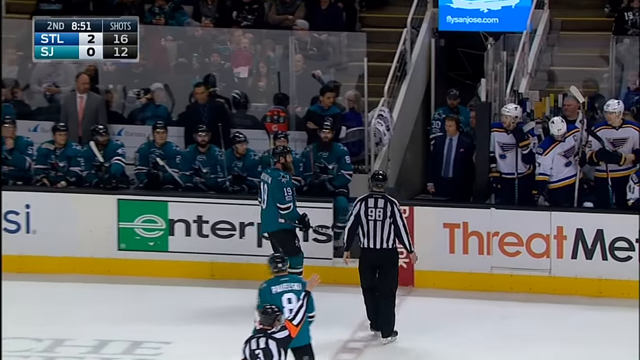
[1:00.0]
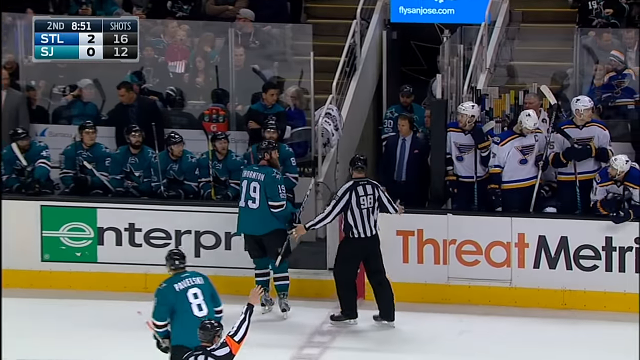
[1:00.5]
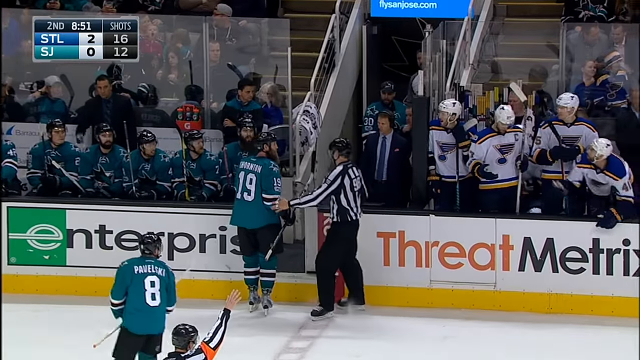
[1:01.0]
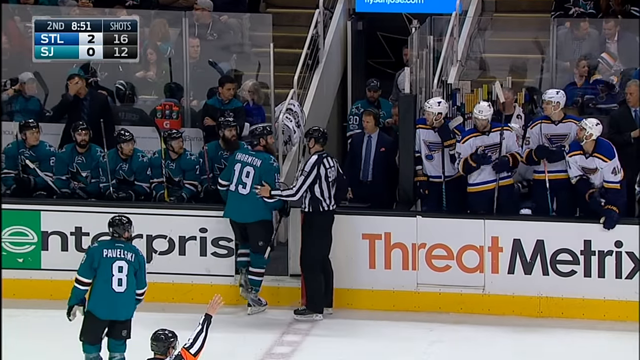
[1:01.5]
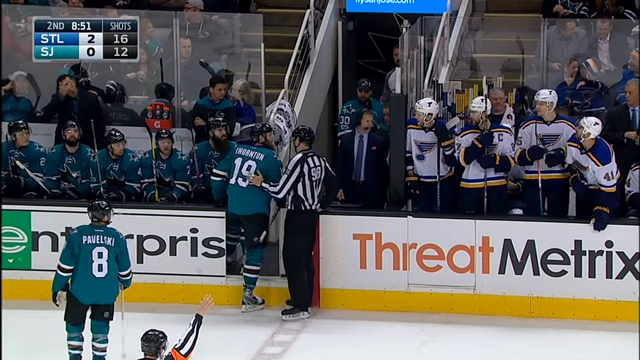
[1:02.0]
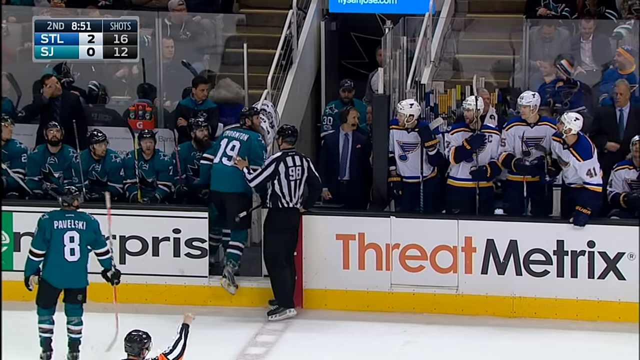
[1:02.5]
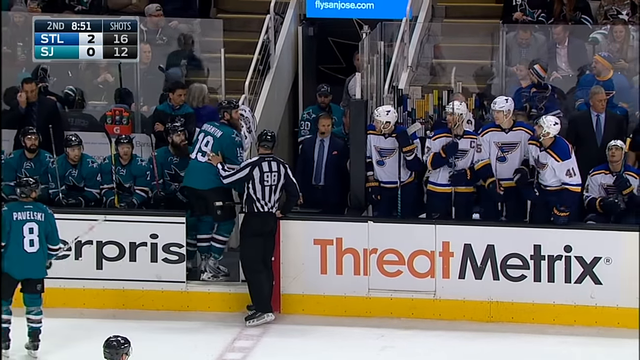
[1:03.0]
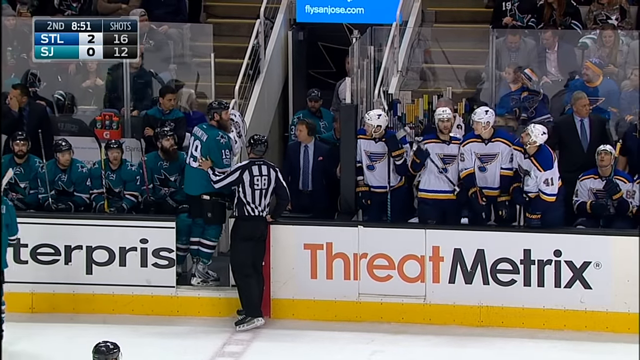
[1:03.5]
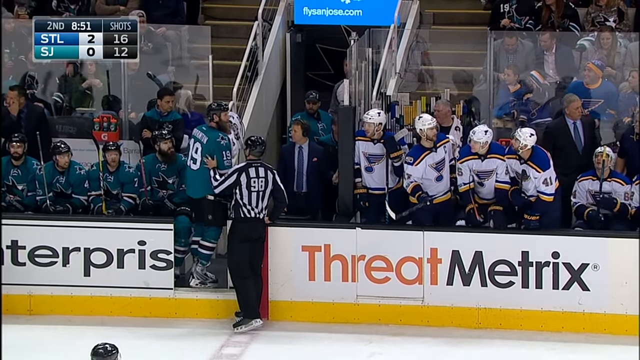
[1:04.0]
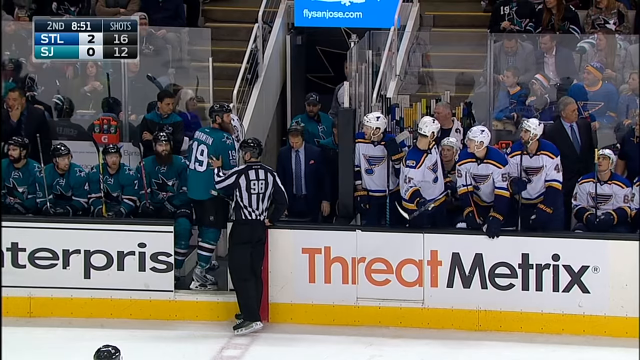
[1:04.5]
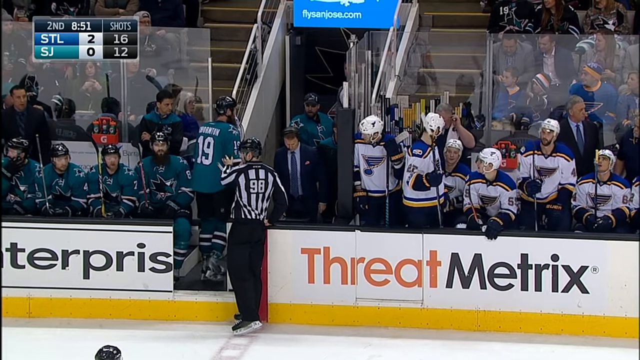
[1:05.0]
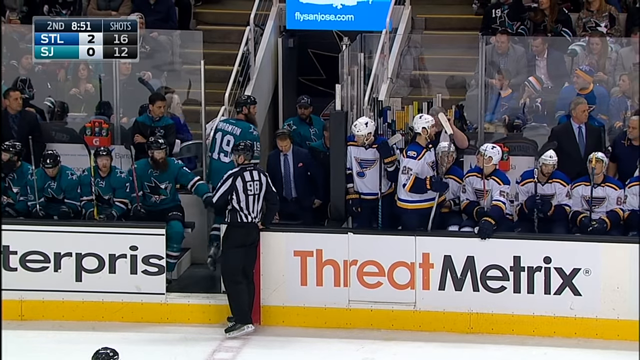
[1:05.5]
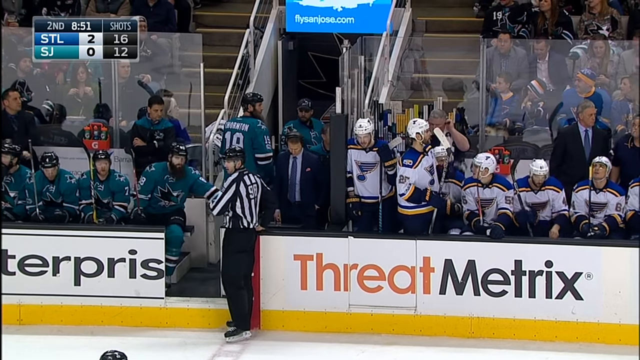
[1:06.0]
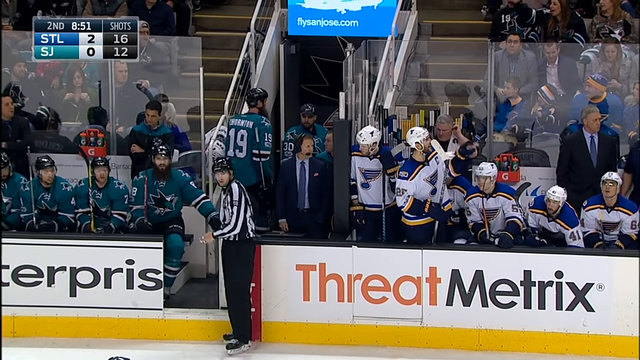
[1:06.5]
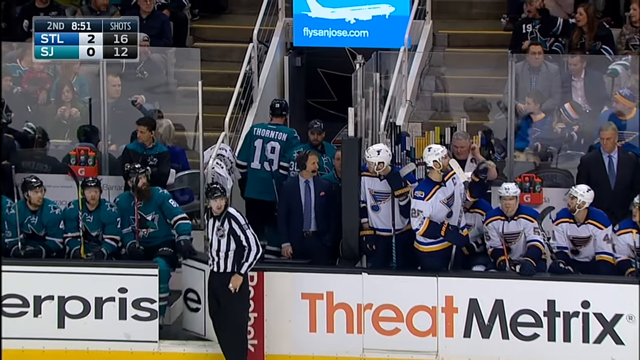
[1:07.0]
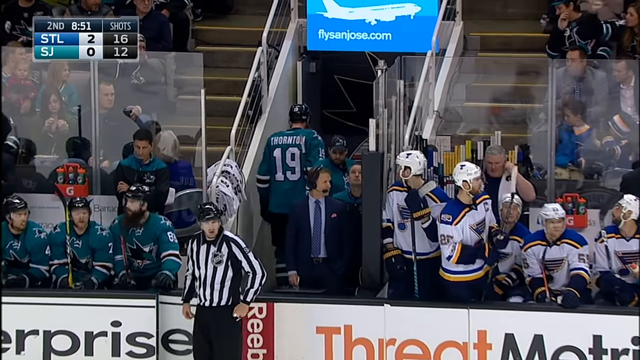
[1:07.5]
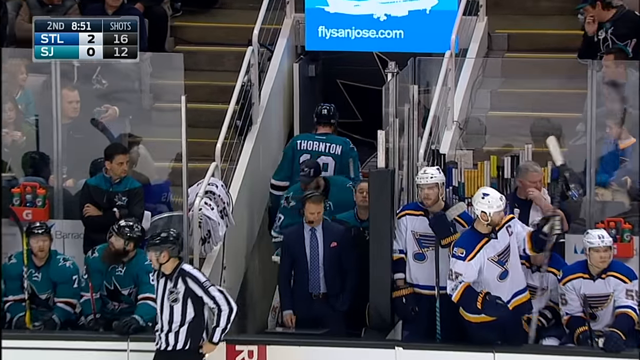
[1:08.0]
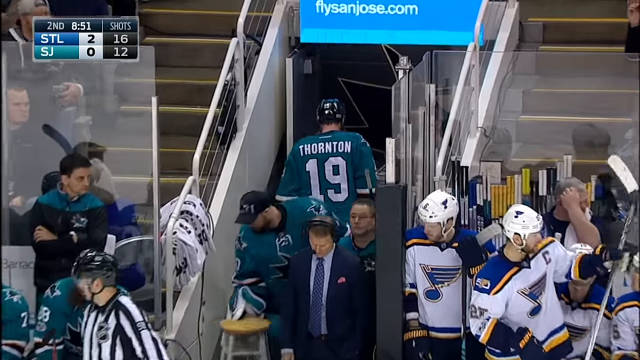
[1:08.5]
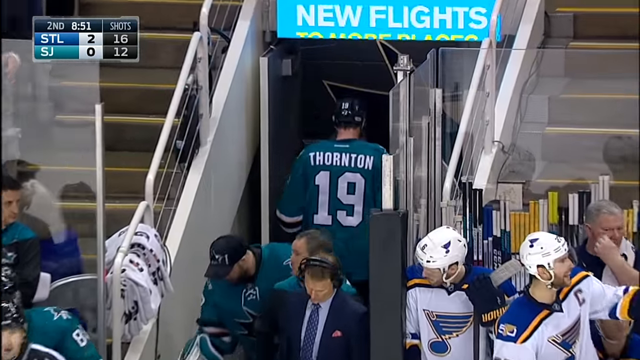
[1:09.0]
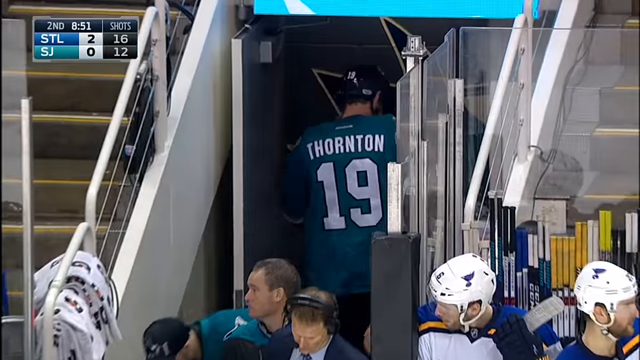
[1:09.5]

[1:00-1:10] In an ice hockey game, a referee puts number 19, known as Thornton, out of the game; he is escorted by the referee and leaves. Number 19 wears a teal jersey and a black helmet. His teammate, number 8, skates by and almost has words with the opposing team, who are in white and blue and black and gold jerseys. The score is 2-0 in the second quarter. Advertisements on the wall of the rink say "Enterprise" and "Threat Metrics", and a TV shows an advertisement for FlySanJose.com that says "new flights to more places".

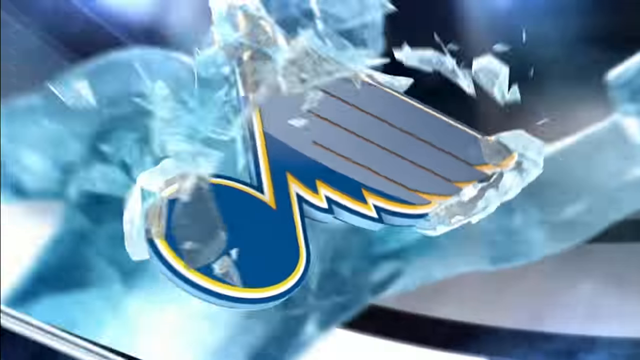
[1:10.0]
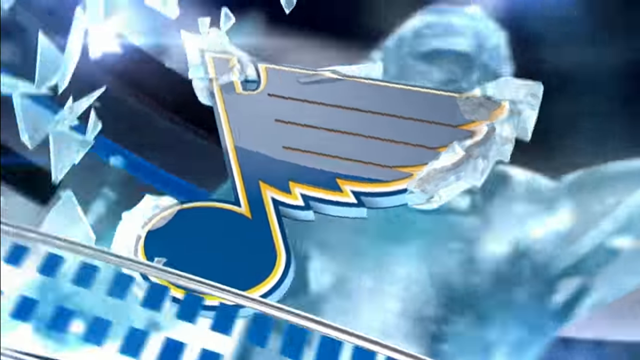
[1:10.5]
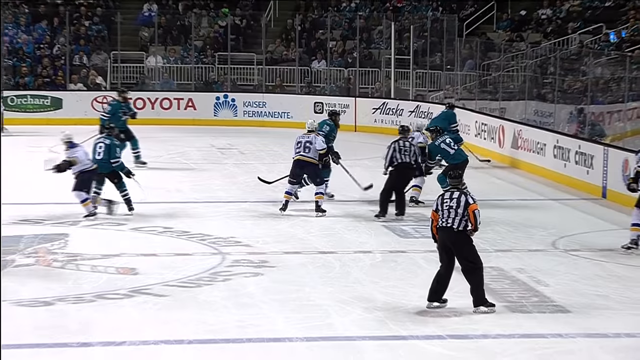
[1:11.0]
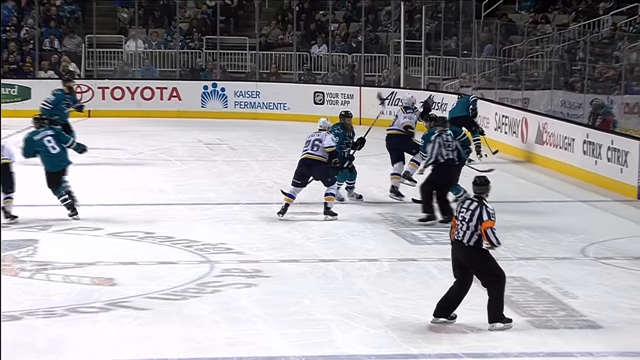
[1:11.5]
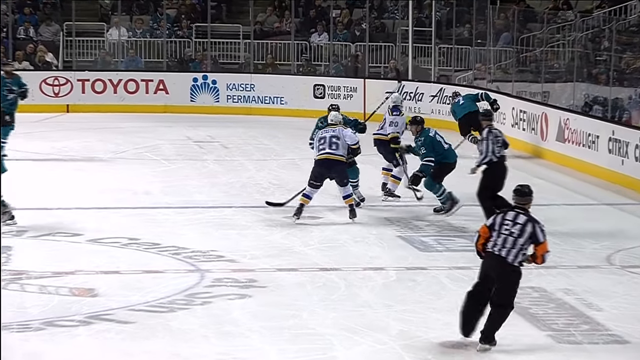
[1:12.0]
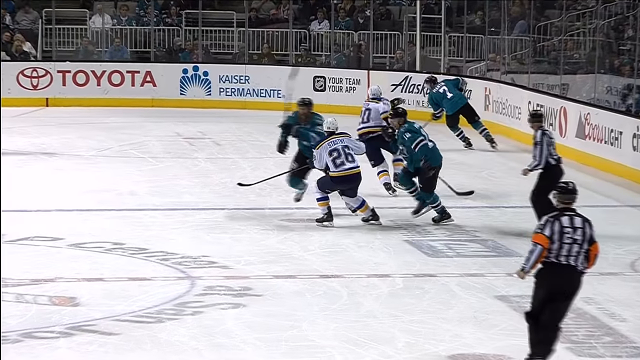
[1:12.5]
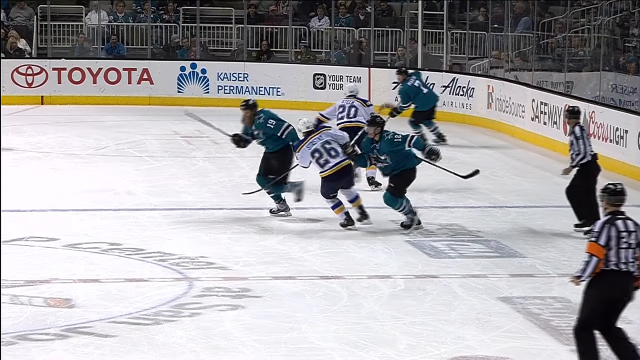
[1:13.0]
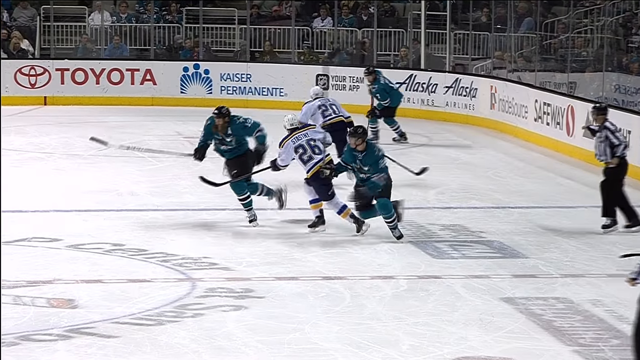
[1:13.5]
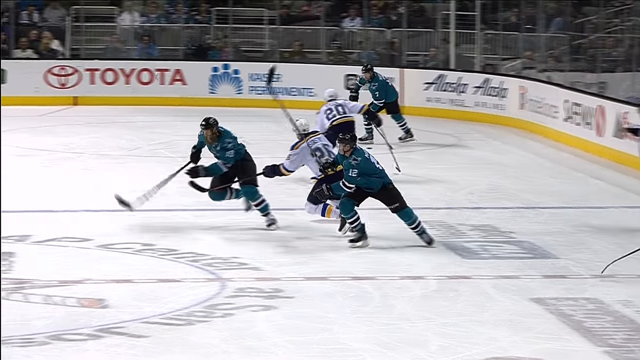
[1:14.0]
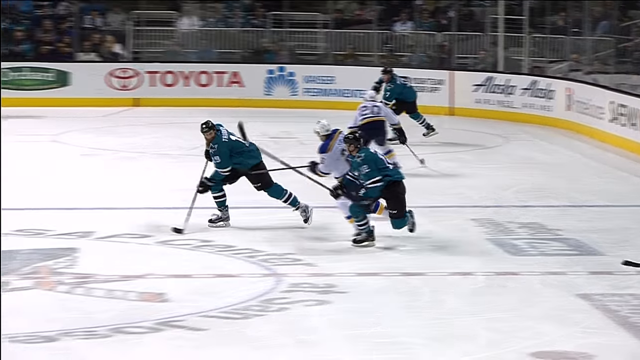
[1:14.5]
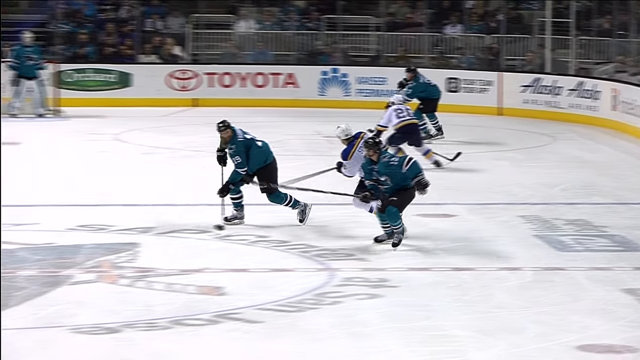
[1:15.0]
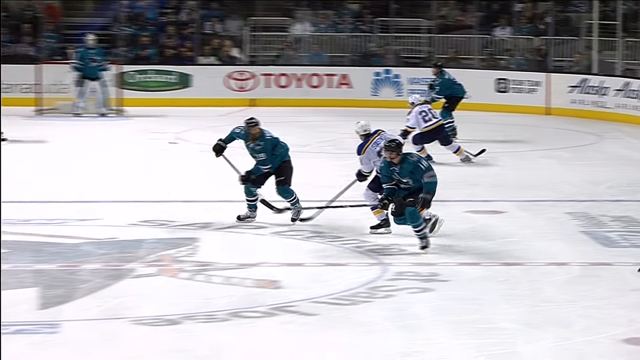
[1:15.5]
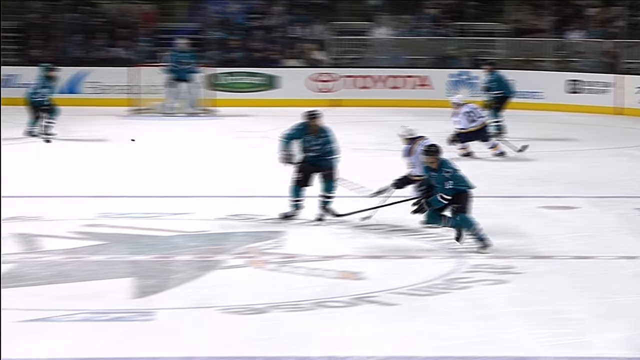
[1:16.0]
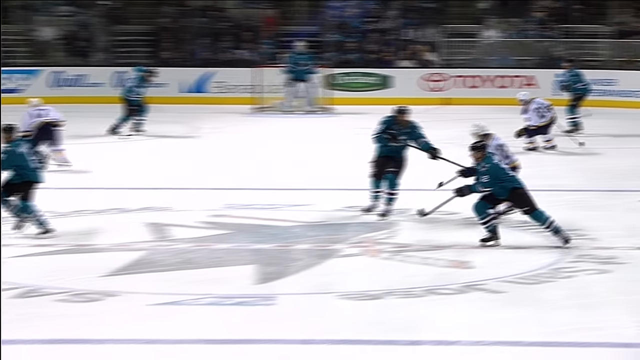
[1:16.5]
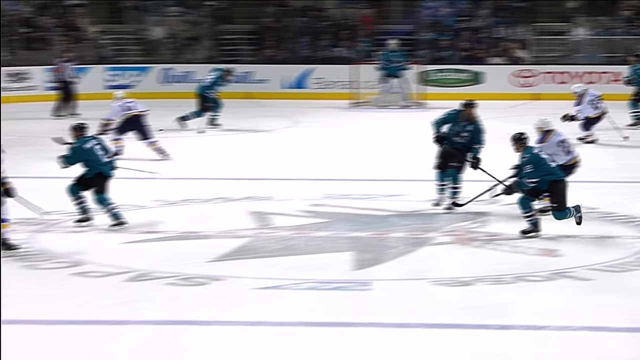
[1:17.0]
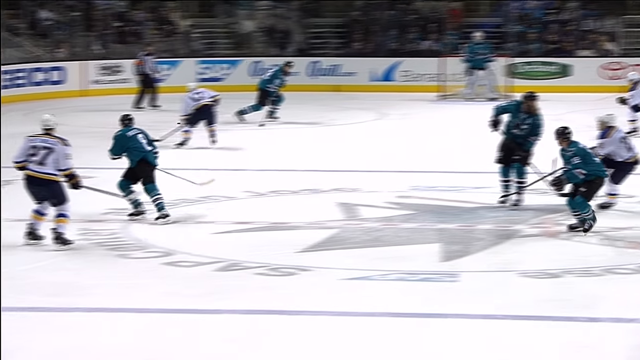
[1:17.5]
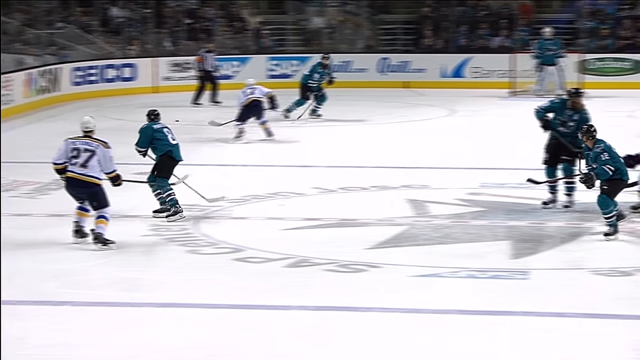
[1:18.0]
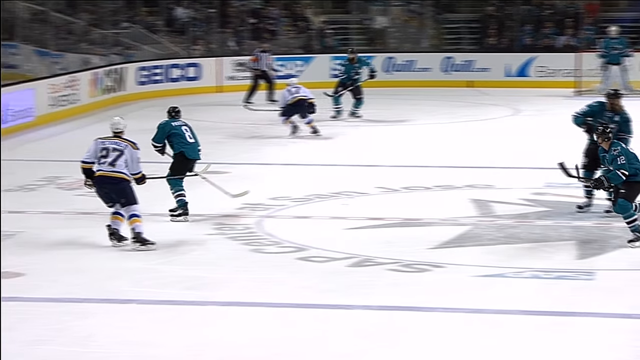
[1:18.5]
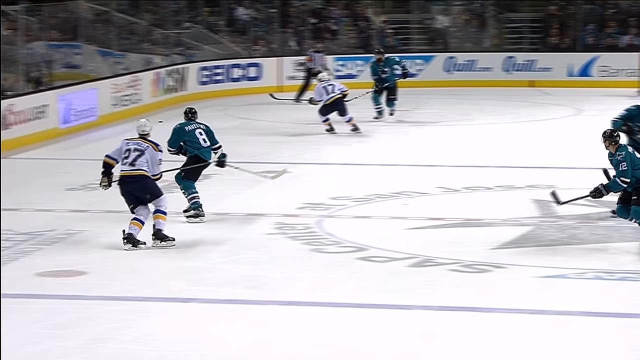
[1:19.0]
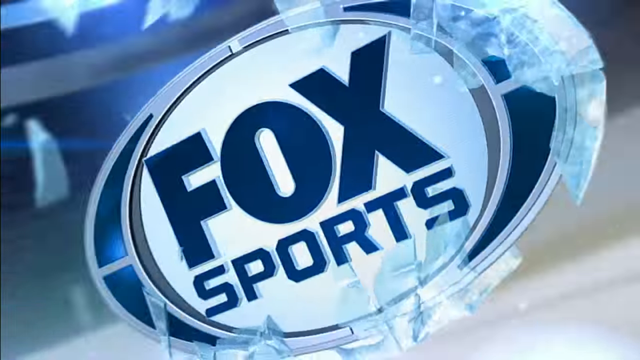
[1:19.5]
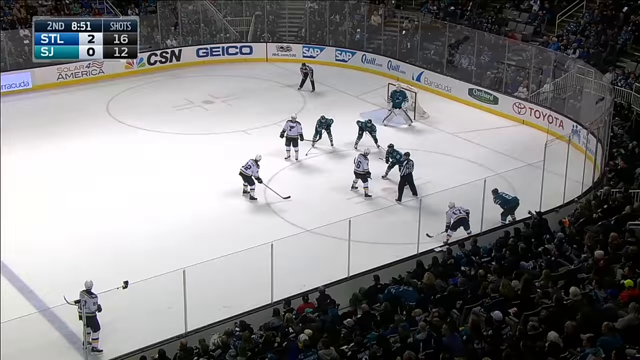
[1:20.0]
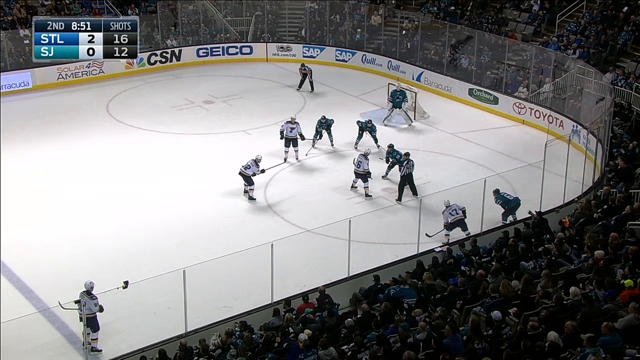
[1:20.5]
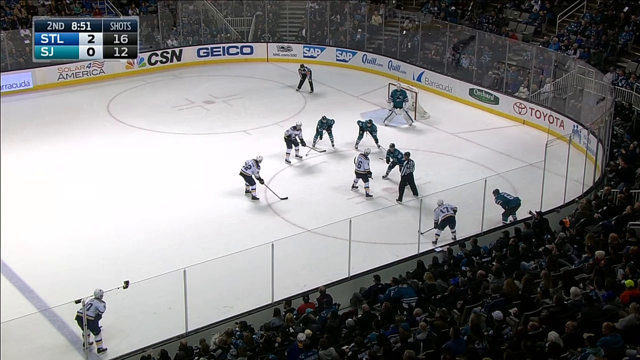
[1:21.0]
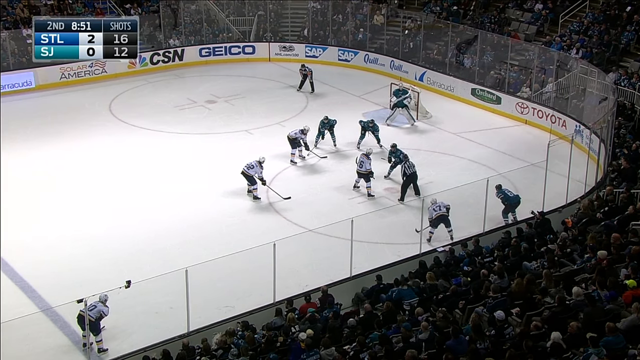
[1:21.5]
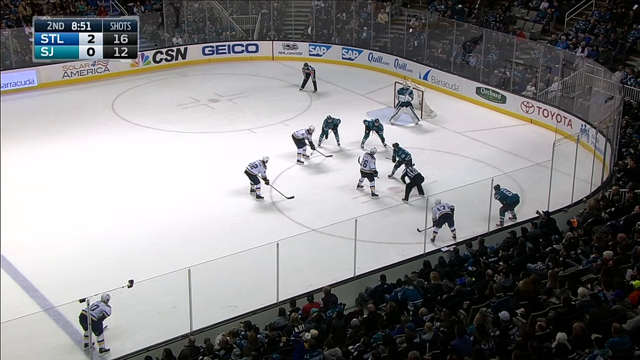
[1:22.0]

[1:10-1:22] Players in teal uniforms with black pants and black helmets play a team in white uniforms with blue and gold trim and white helmets. Several players from each team are on the ice, along with two referees. Advertising signs surround the rink, including Toyota, Geico, CSN, Kaiser Permanente and something about Alaska. It looks like the game is broadcast by Fox Sports, and the players appear to be in the middle of the game. It is the second quarter and the score shows 2-0; the blue team, in white and blue, looks like it is winning.